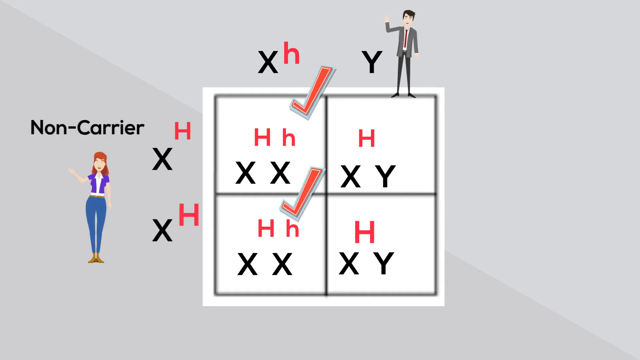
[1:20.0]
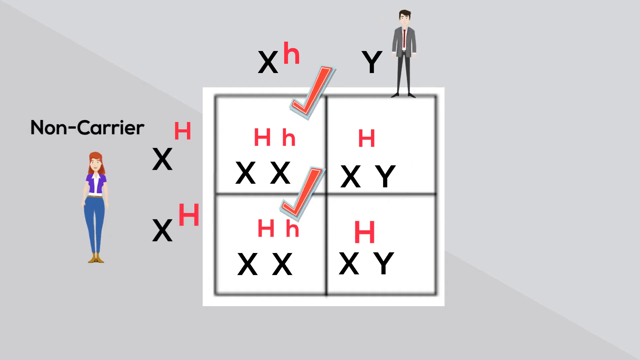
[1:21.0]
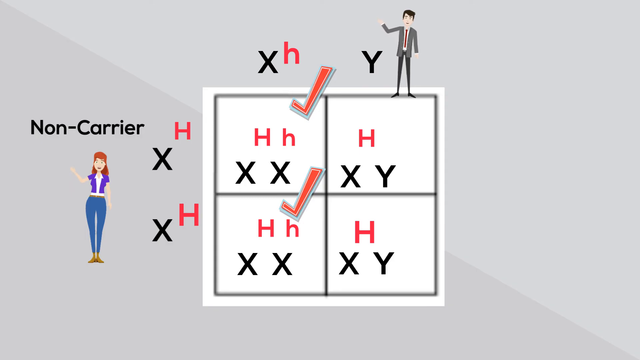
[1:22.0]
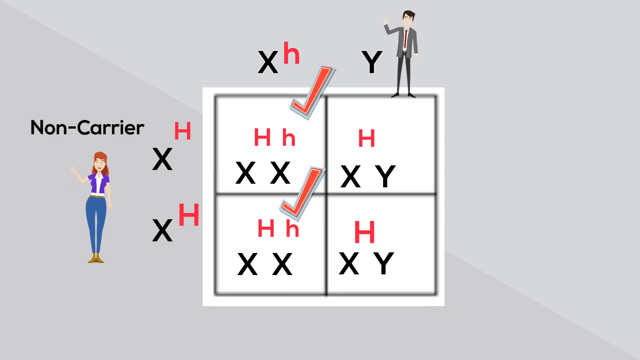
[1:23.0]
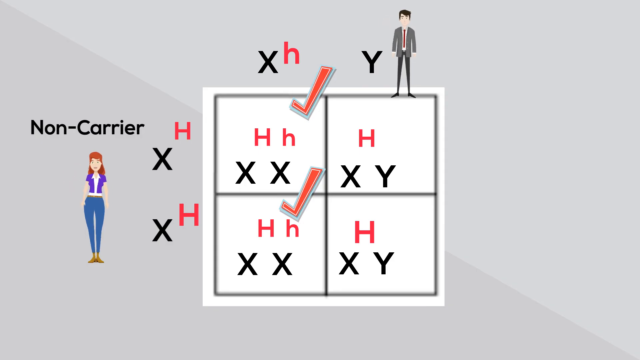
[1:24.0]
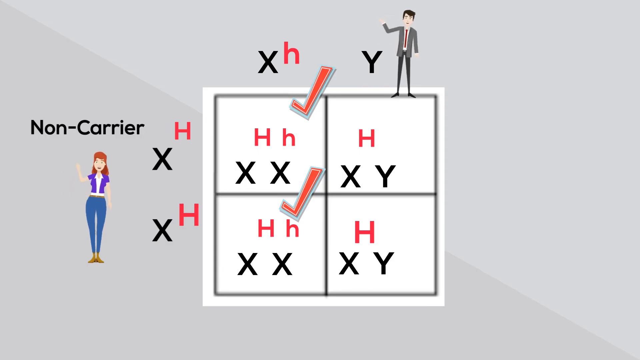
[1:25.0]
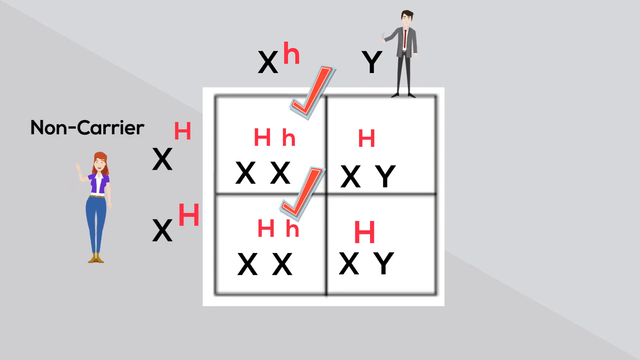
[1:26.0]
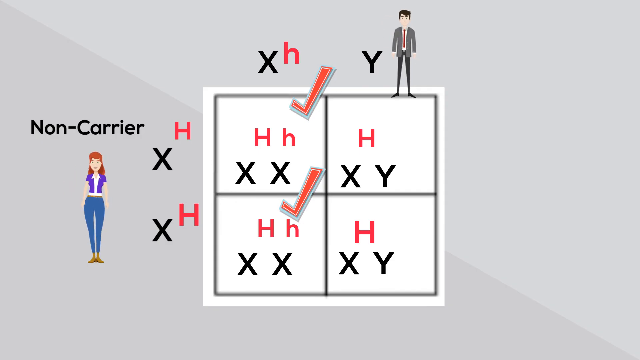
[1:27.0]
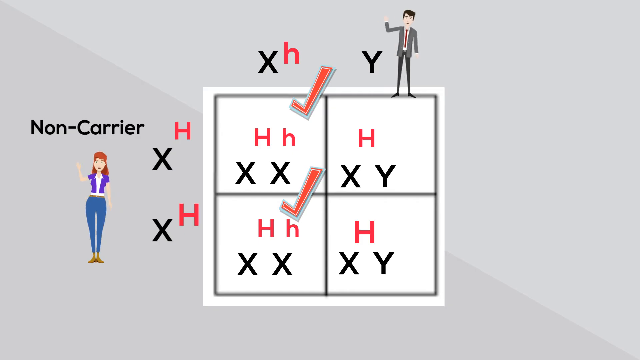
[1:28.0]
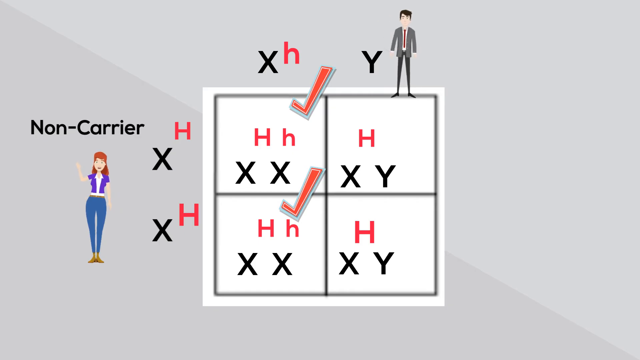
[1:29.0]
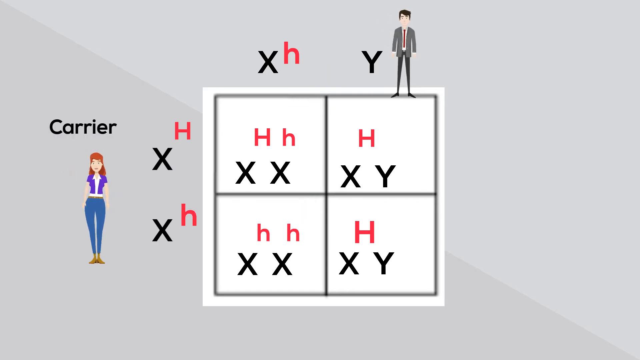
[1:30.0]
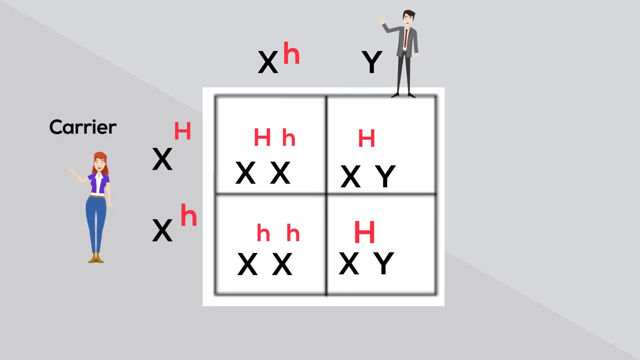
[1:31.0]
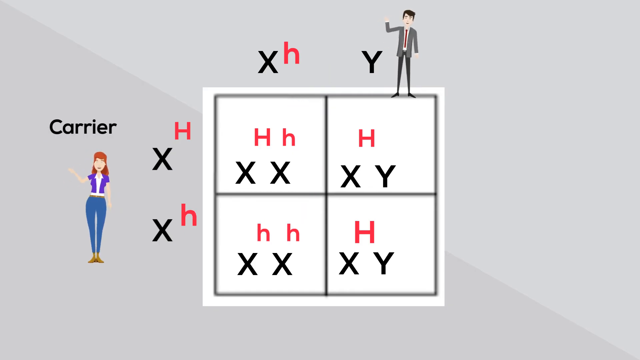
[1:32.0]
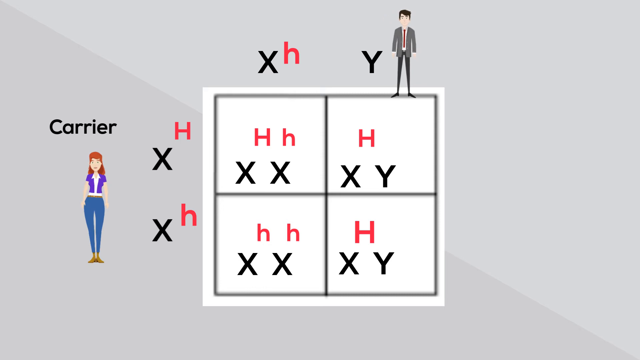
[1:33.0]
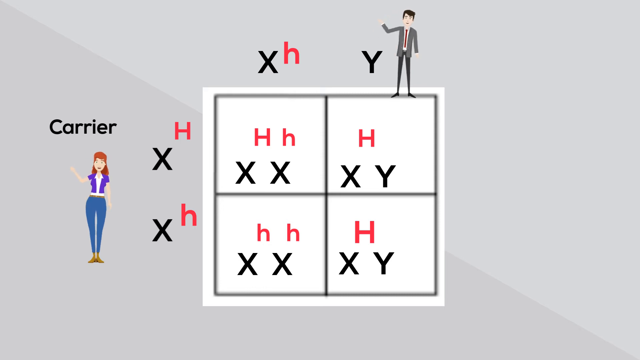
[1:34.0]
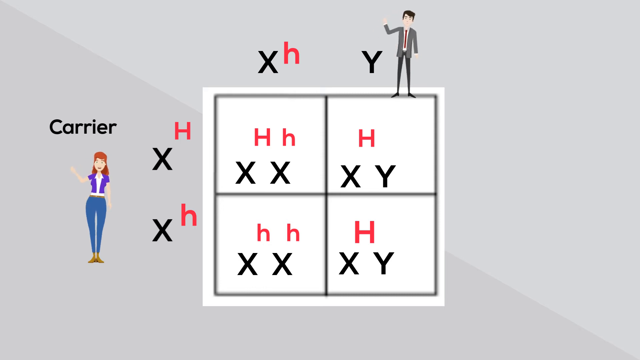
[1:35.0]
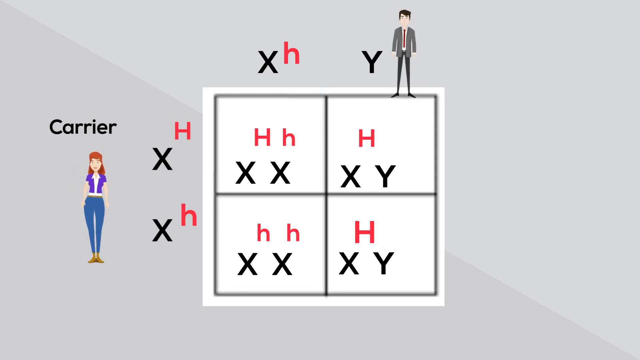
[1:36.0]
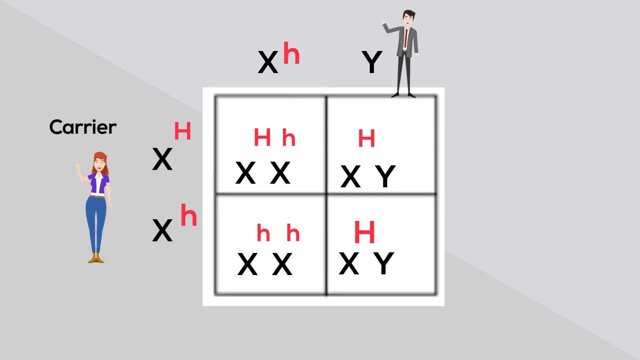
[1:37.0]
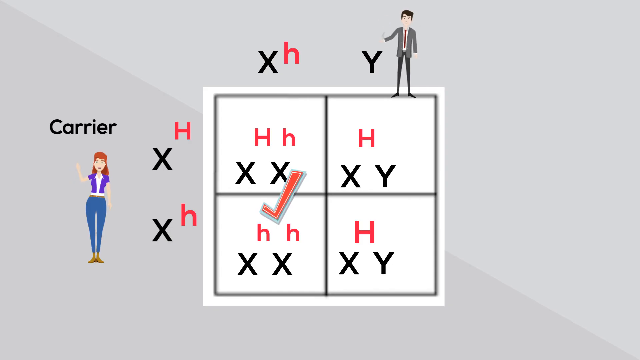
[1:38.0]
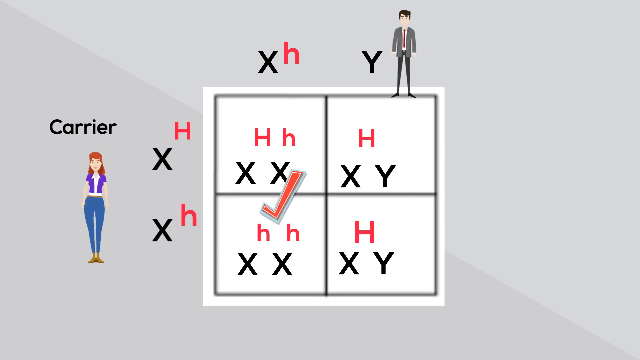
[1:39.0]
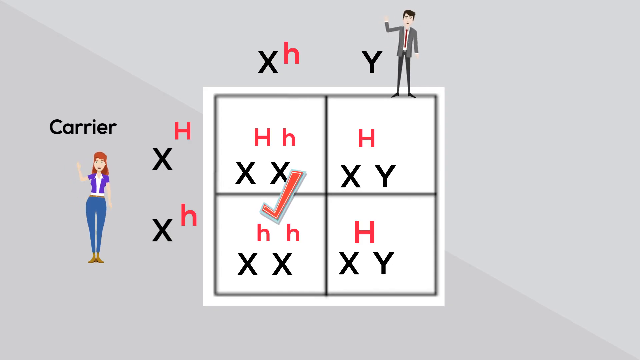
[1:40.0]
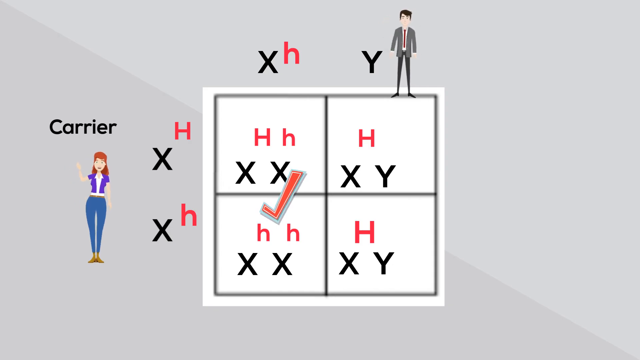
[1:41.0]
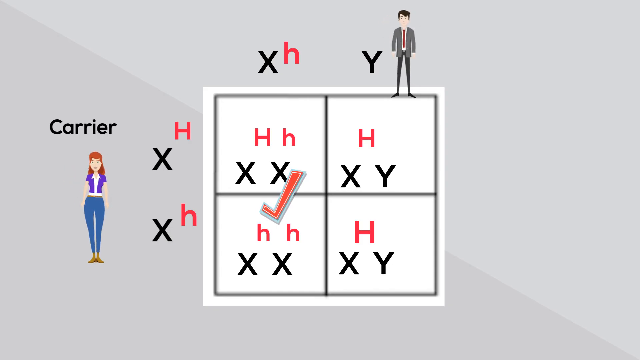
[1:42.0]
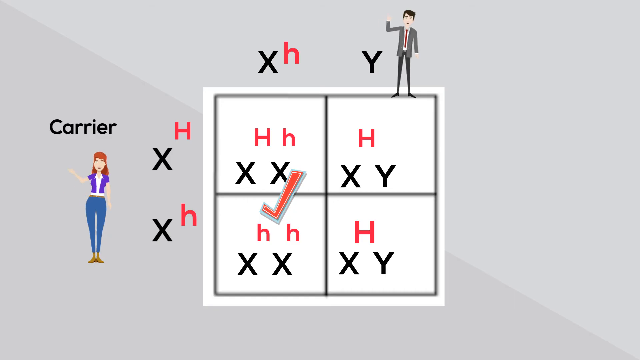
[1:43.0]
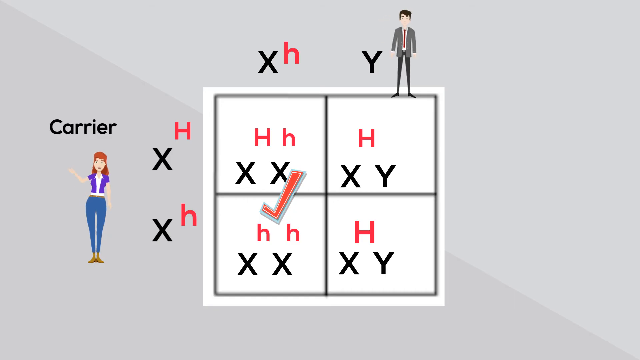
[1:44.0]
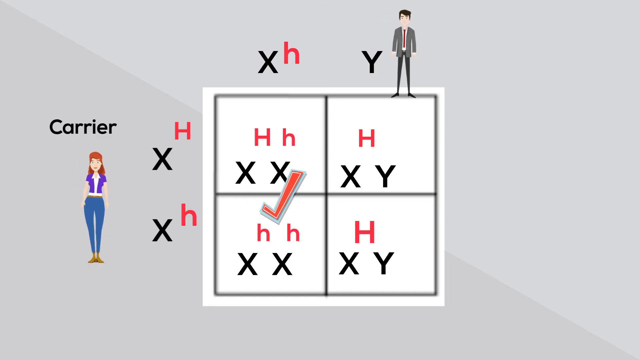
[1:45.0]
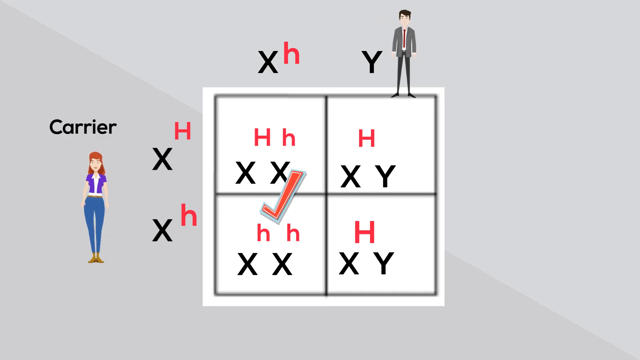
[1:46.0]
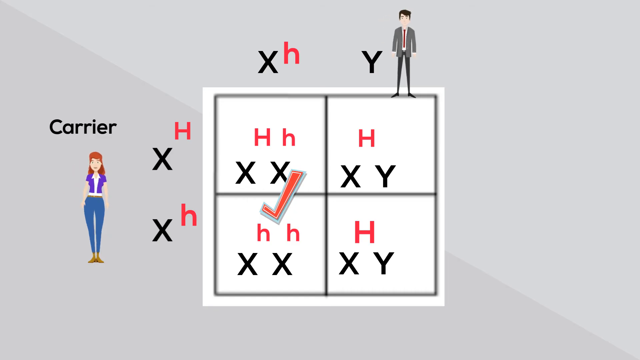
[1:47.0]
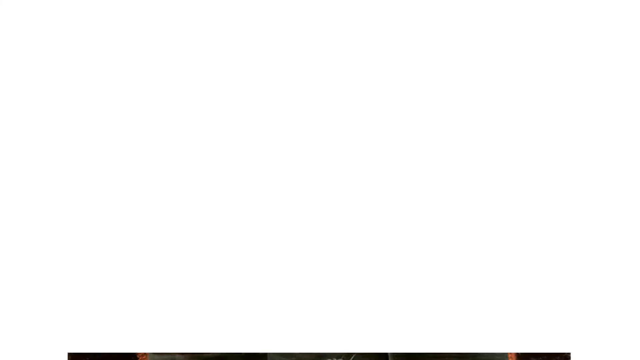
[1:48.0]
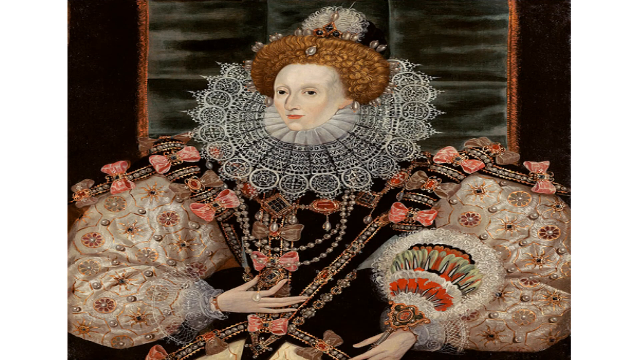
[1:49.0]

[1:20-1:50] A larger white box in the middle of the screen is divided by a line from top to bottom and one from left to right into four small boxes. A little animated character is at the upper right and a female character is on the left side of the box. The upper left box contains a capital H and a small h in red and a capital X, with a red check on its right side. The next box has a red check at the top right corner, a large H, a small h in red, and a black X with an x underneath it in black toward the upper right. The next box has a red h, a black H, and an X and Y. The bottom right box has a red h and an X and a Y in black. To the left of the boxes, outside them, are a large X and a small h, and a large X and a dark large H on the left side of the bottom row.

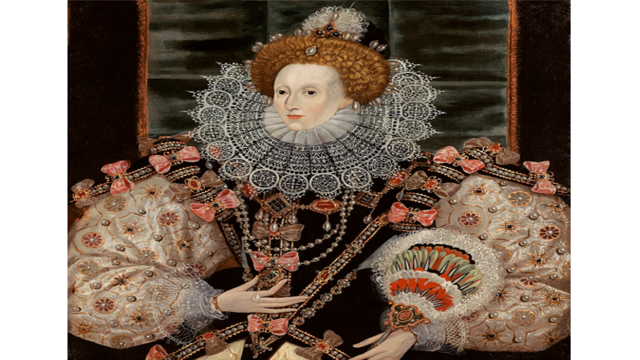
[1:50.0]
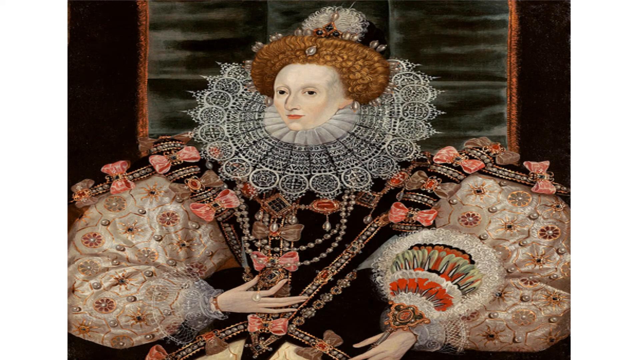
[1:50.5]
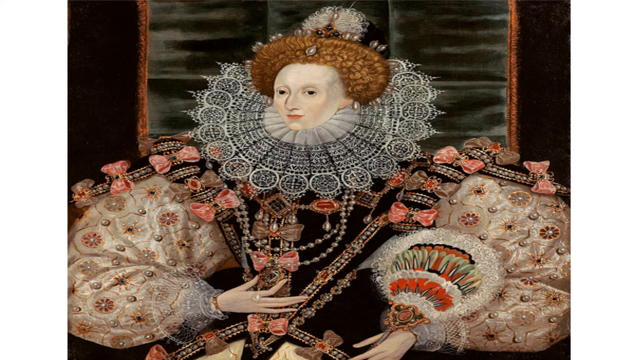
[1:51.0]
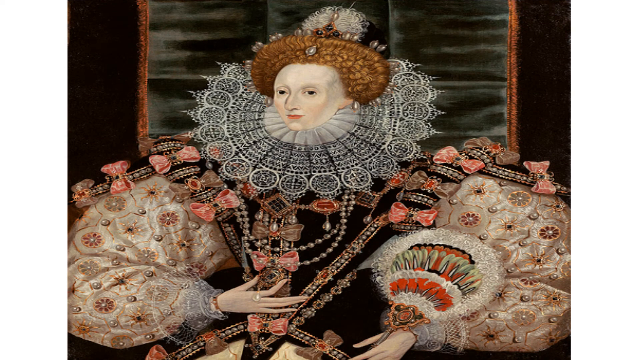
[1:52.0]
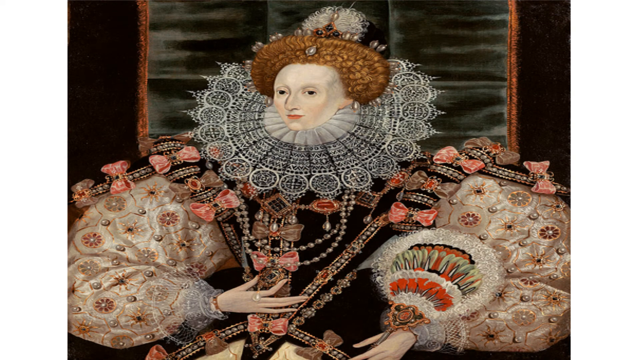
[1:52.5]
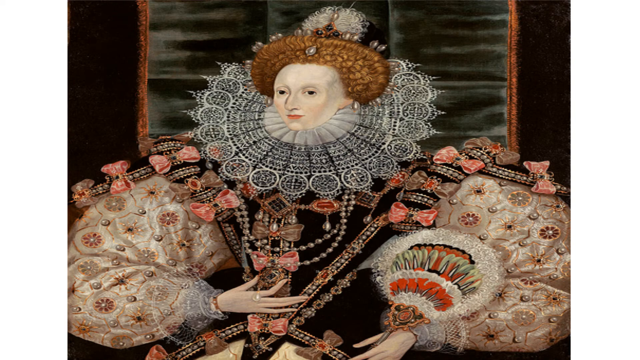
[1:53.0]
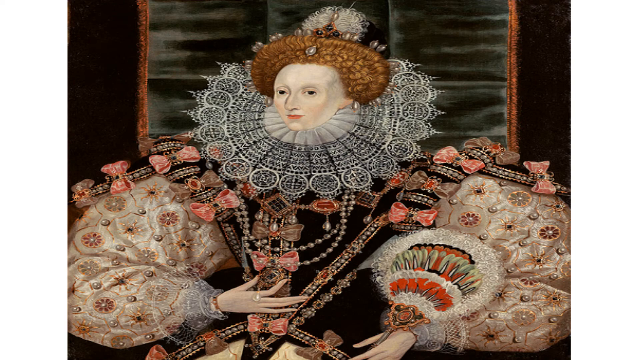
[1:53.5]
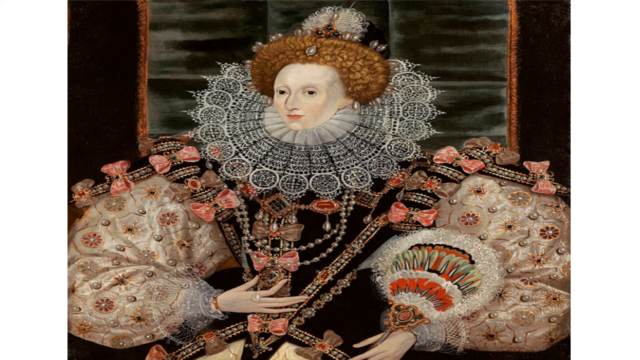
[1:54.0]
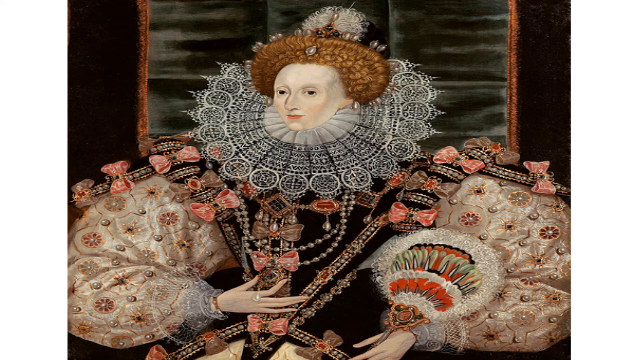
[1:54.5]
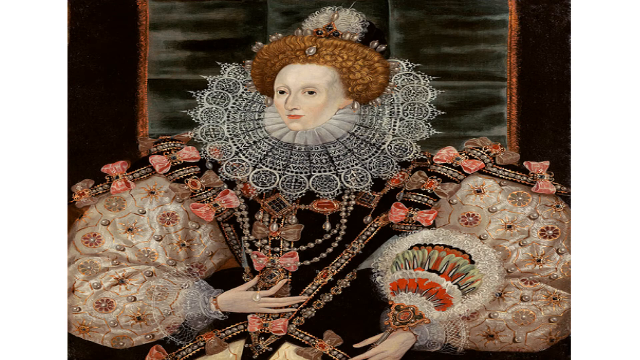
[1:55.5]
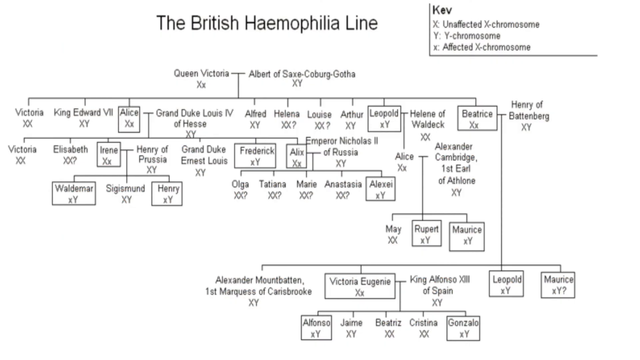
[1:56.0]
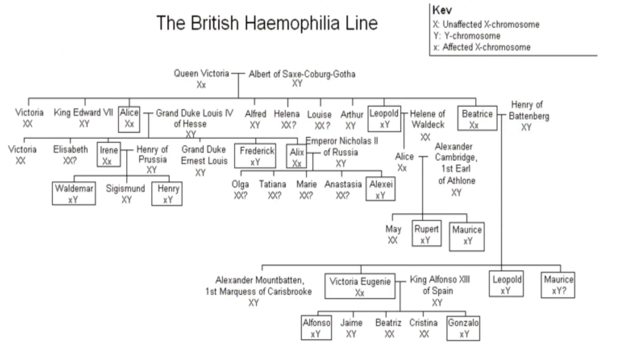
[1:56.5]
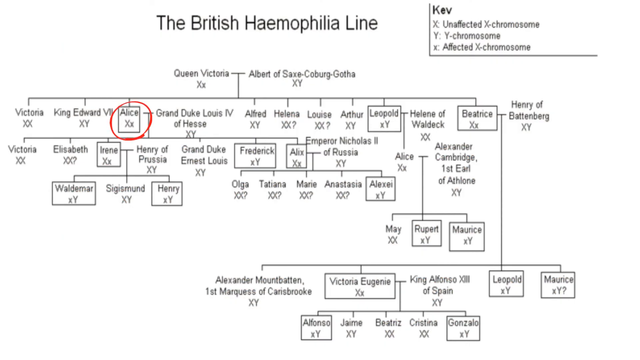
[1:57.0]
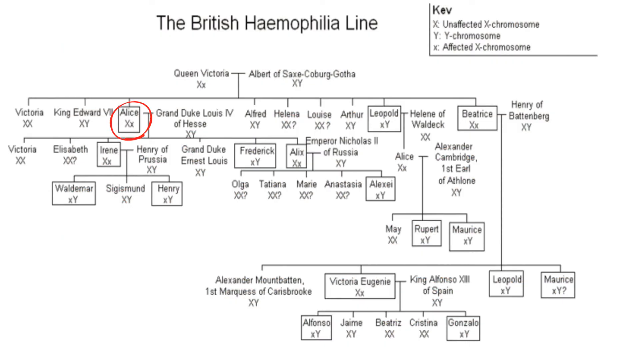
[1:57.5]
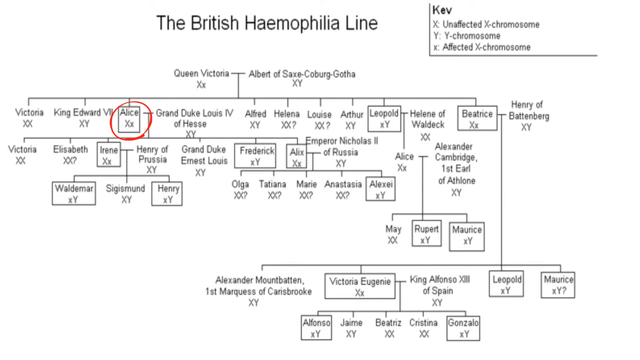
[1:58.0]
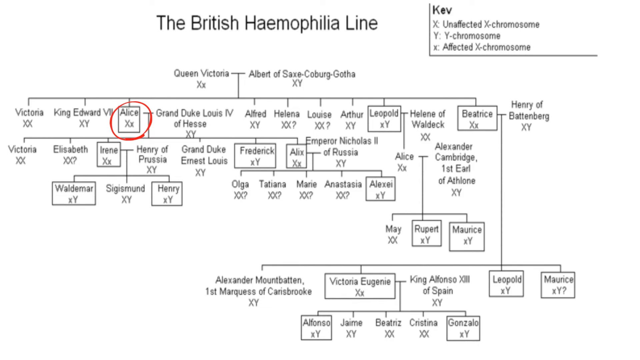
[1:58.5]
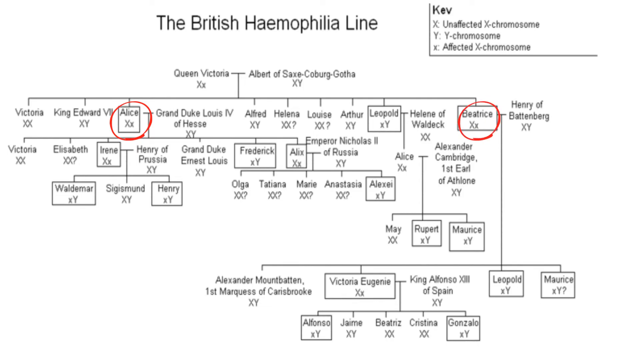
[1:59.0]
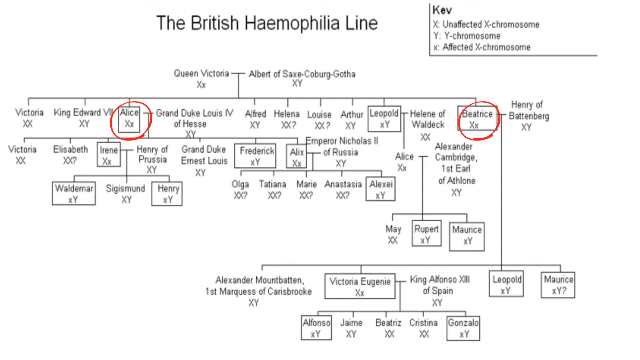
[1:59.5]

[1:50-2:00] An animated female with red hair looks toward the right of the screen. She wears a large amount of clothing, with red bows around her upper body over a black area beneath her neck. Around her neck is a large black and white item with a small circle around it. Below that are a tan jacket and a very poofy, big shirt with red, amber and burgundy flowers. Behind her is a gray backdrop with black on each side. Then a screen reads "the British hemophilia line." In the upper right corner is a key: X equals unaffected X chromosome; aligned under that, Y equals Y chromosome; and on the next line, a small x equals affected X chromosome. The view moves down to a graph.